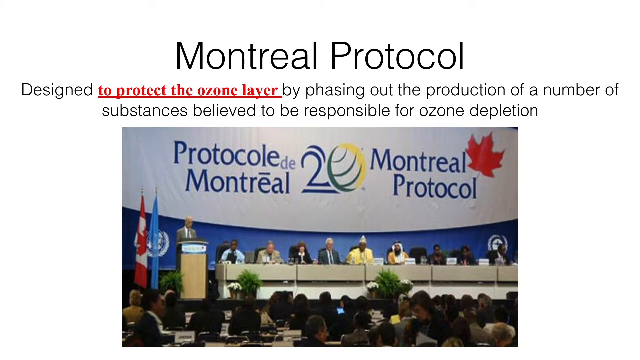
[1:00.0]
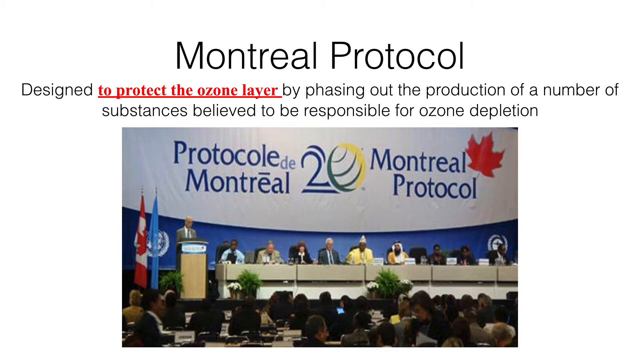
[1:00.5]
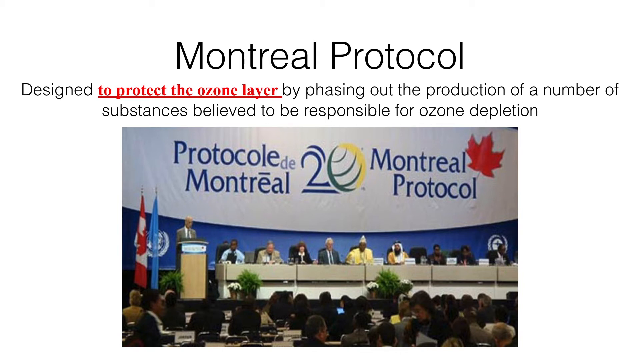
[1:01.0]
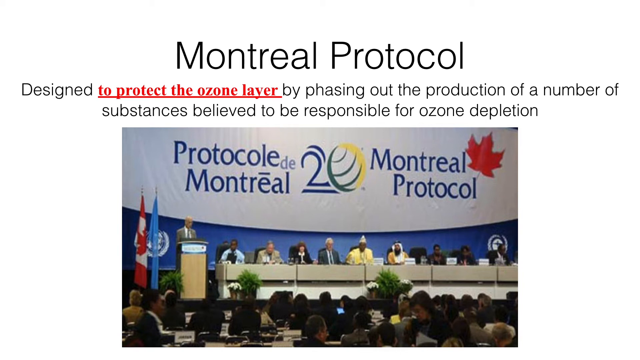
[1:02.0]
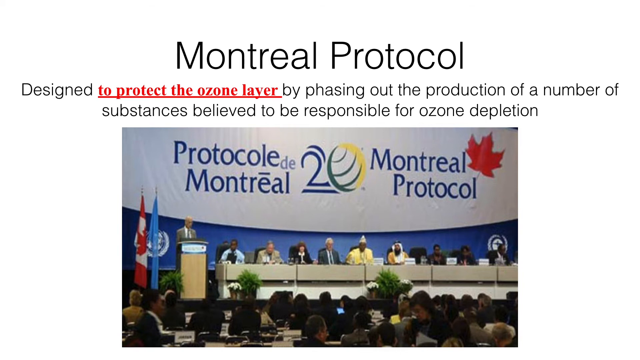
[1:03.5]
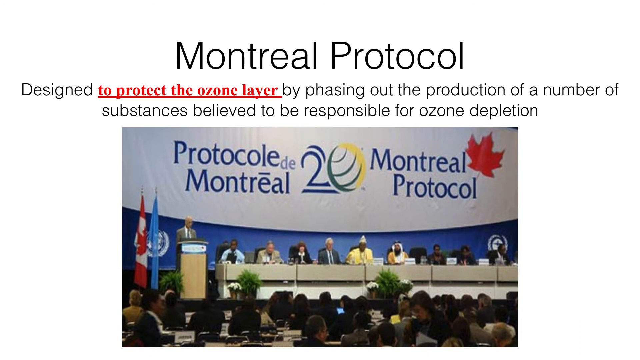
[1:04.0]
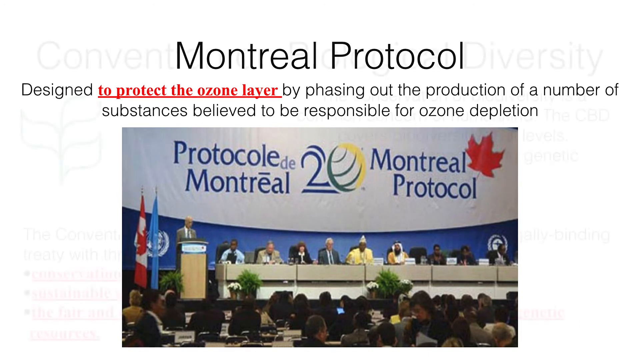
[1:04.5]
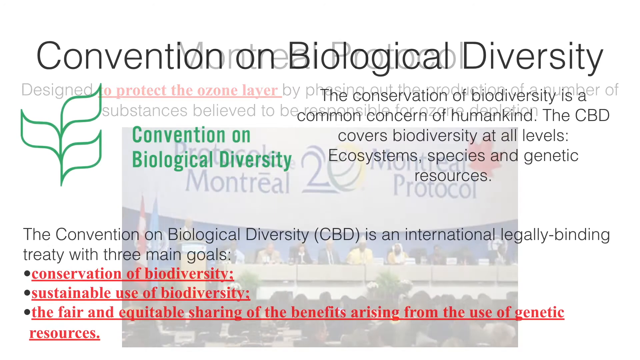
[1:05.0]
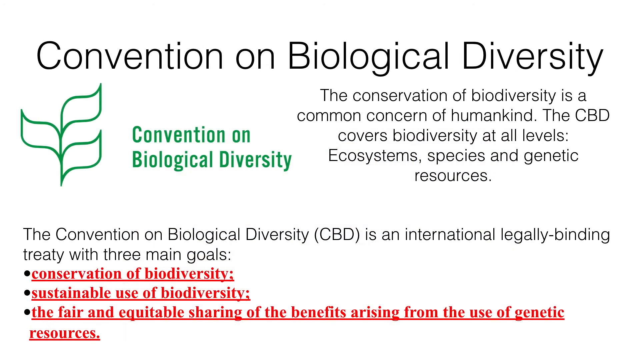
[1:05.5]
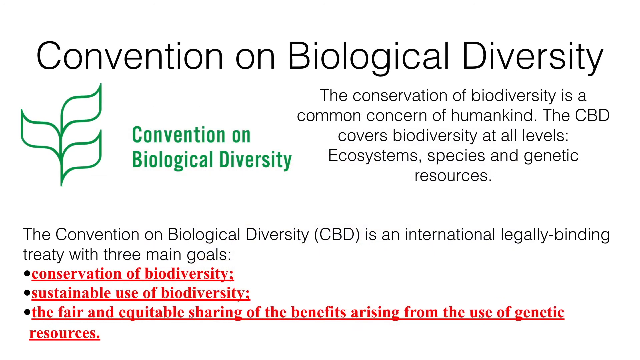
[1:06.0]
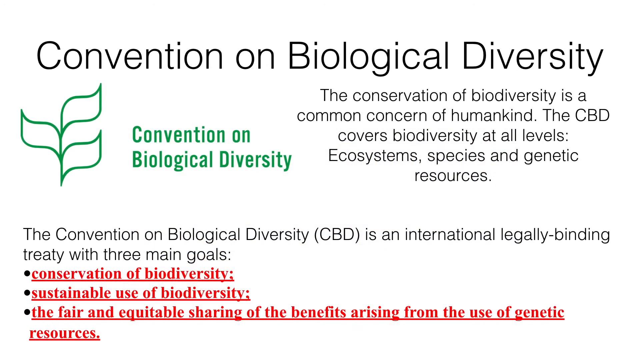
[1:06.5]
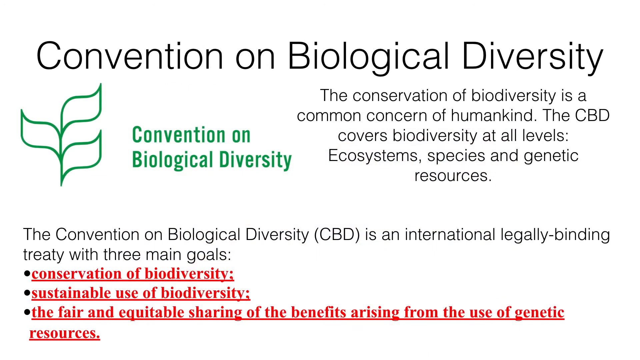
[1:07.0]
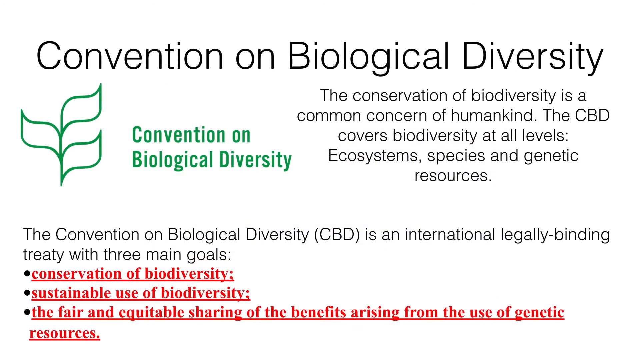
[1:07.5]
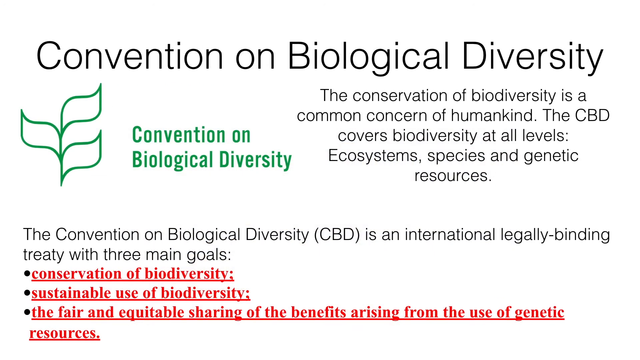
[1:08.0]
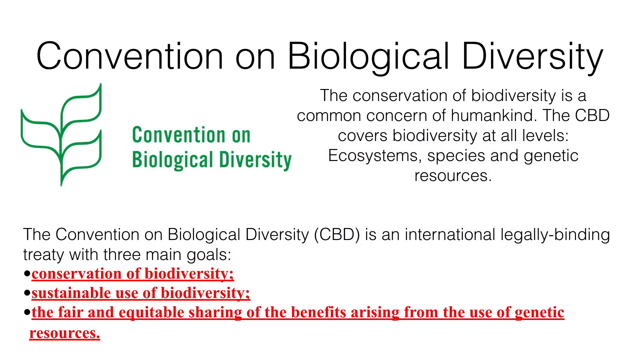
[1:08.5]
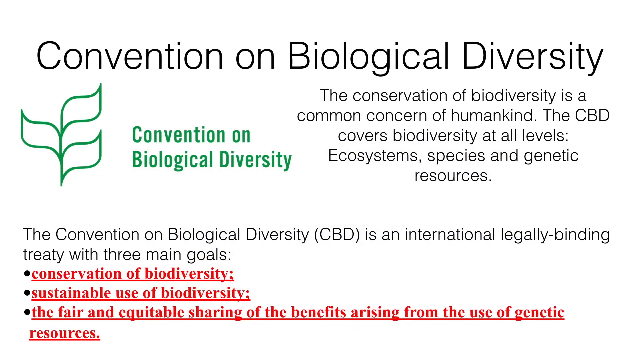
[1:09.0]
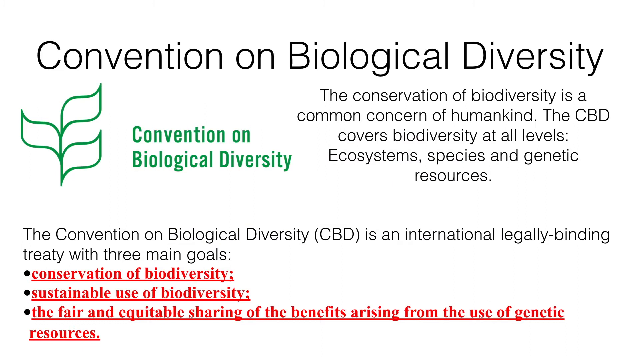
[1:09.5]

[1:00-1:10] A series of what look like pages on a website or in a video promoting different areas of environmental protection and activism continues. The first page has a header reading "Montreal Protocol," and below it text reads "Designed to protect the ozone layer by phasing out the production of a number of substances believed to be responsible for ozone depletion." Below this is a photograph of what looks like an international panel on a stage. Nine people are sitting behind a long white desk and appear to be wearing clothing from different countries. On the left, a person is standing at a podium speaking. Behind them, a large sign on the wall reads "Montreal Protocol" in French on the left and English on the right, with a stylized 20 in the center and a red maple leaf next to "Montreal Protocol" on the right. An audience is sitting in front of them. The screen then changes to a different webpage that reads "Convention on Biological Diversity." On the left is a stylized image that looks like a plant stem with three green leaves, and next to it reads "Convention on Biological Diversity." Beneath that is text explaining what the Convention on Biological Diversity is.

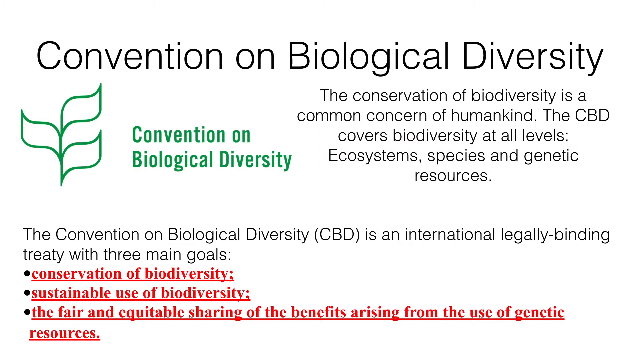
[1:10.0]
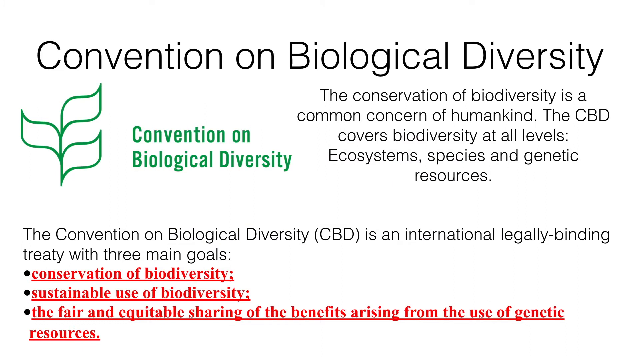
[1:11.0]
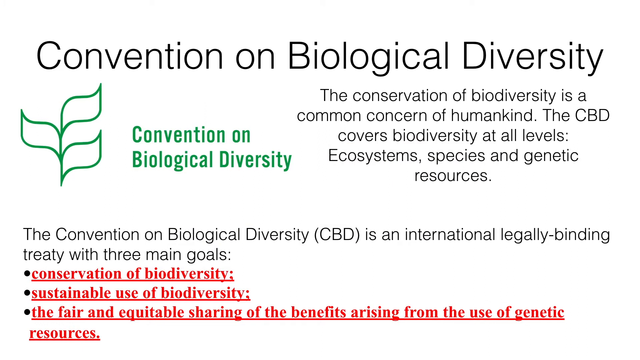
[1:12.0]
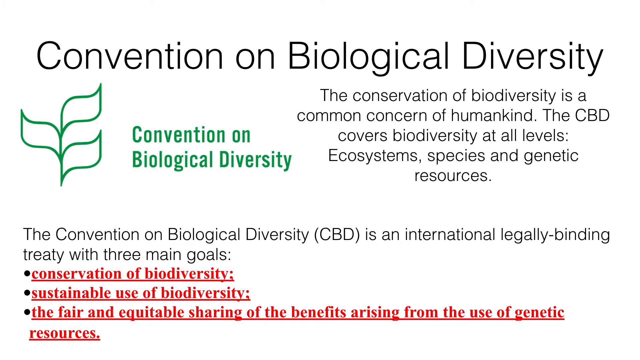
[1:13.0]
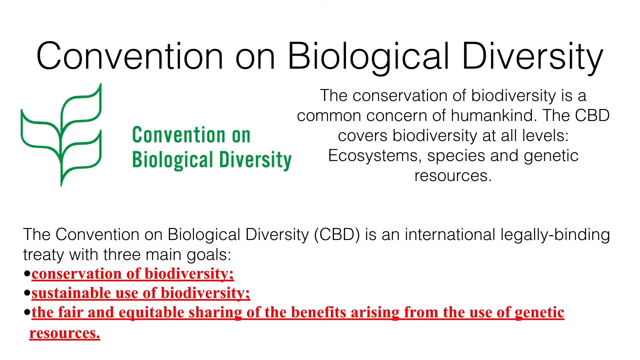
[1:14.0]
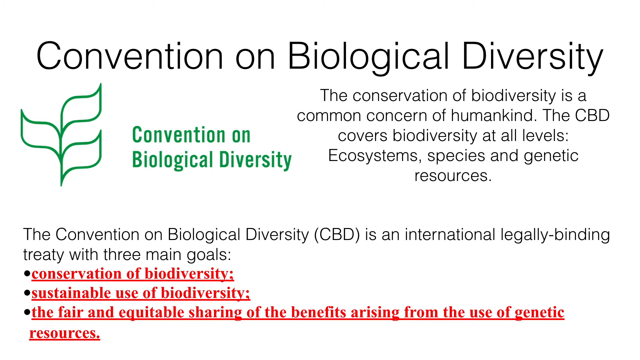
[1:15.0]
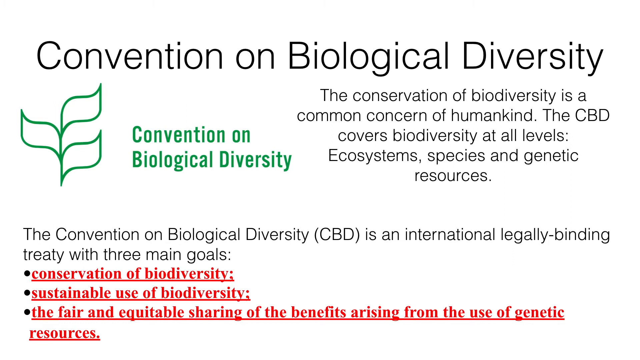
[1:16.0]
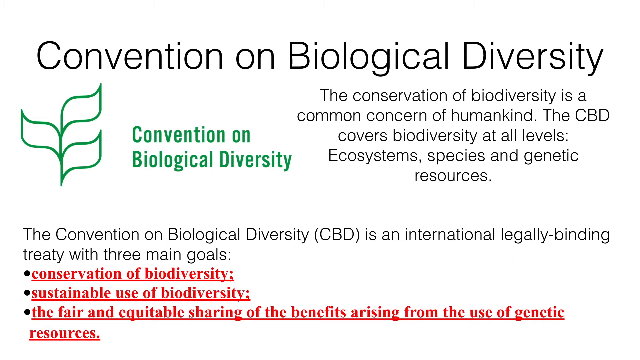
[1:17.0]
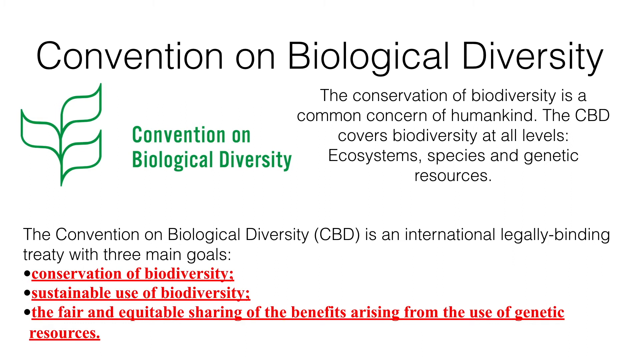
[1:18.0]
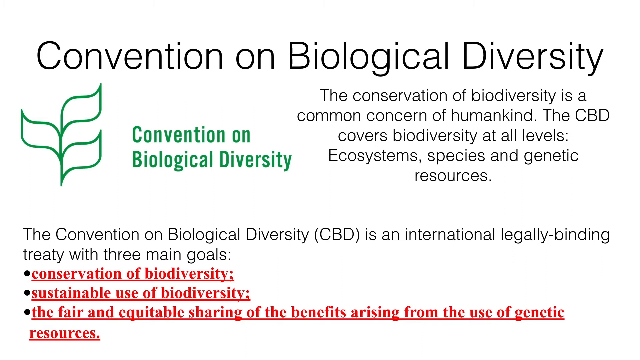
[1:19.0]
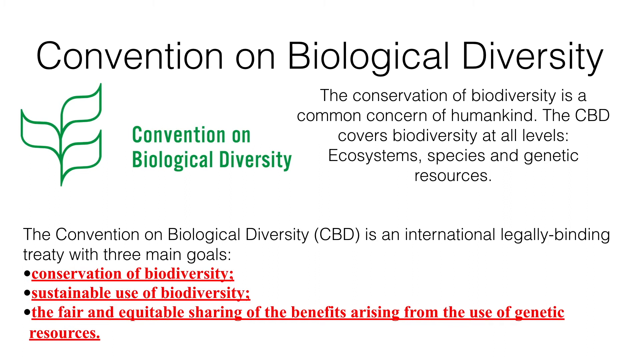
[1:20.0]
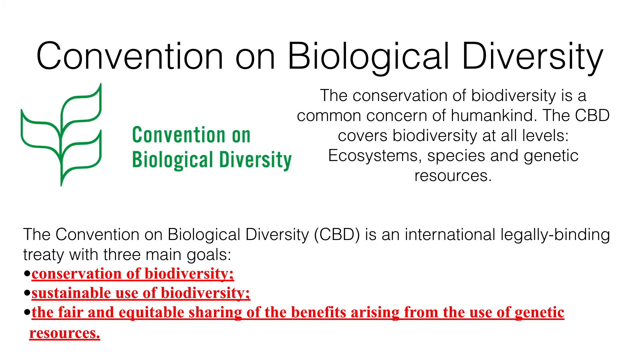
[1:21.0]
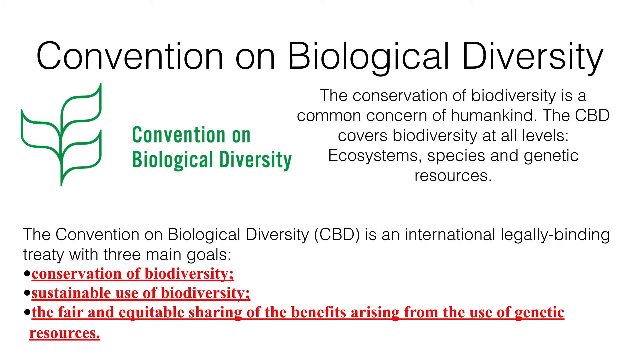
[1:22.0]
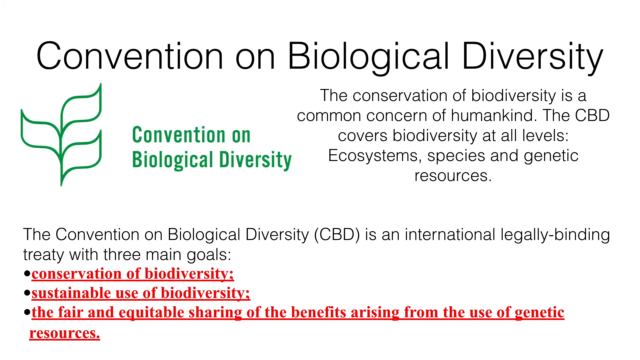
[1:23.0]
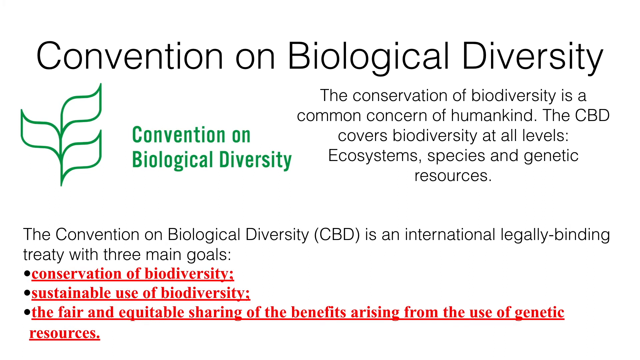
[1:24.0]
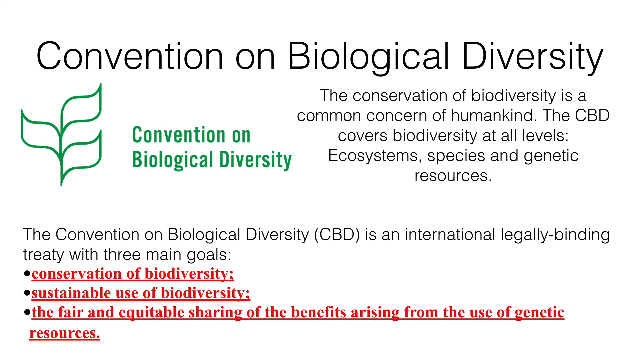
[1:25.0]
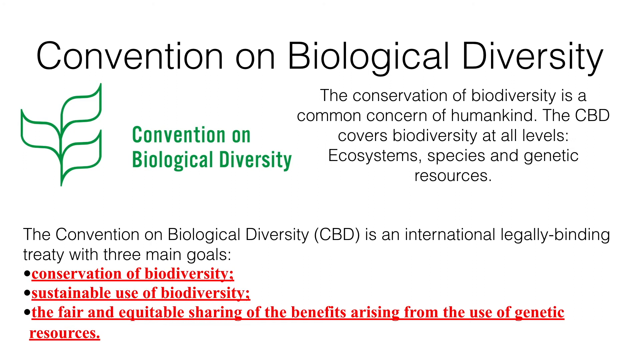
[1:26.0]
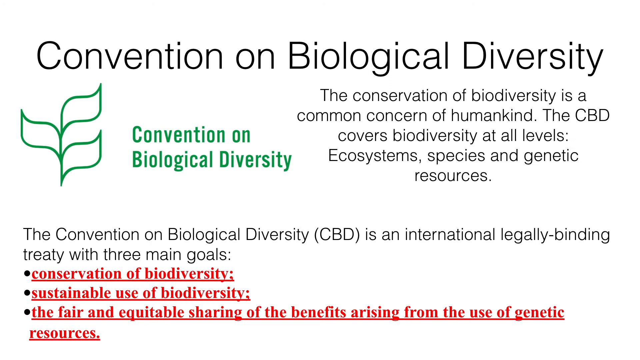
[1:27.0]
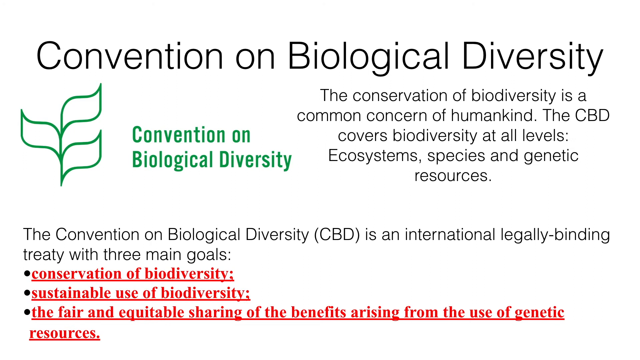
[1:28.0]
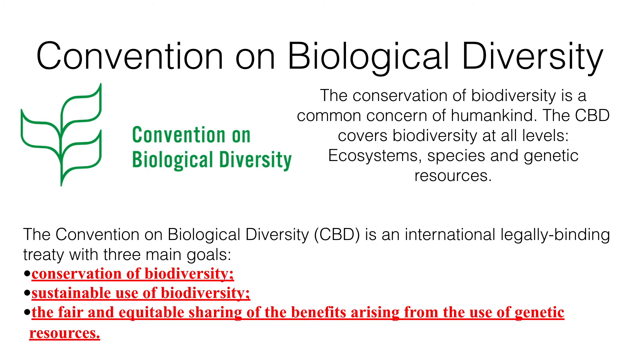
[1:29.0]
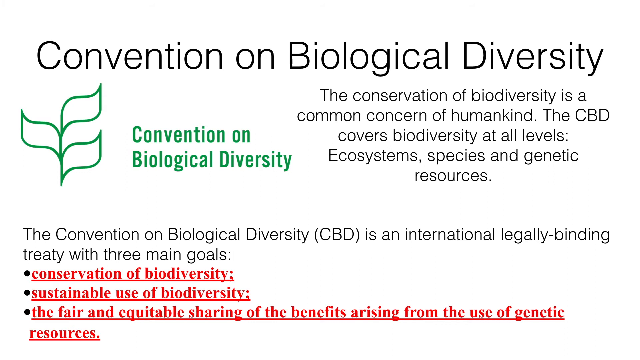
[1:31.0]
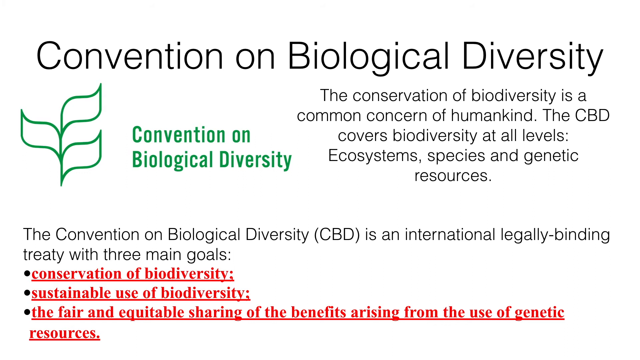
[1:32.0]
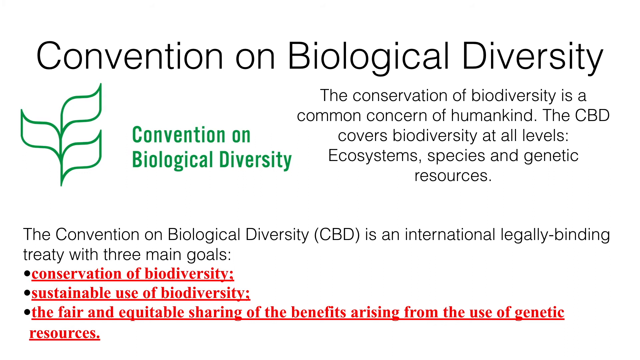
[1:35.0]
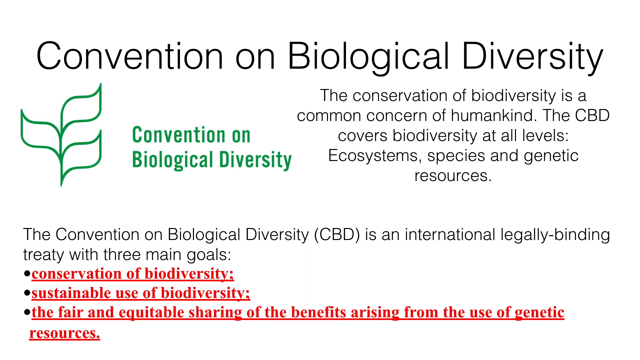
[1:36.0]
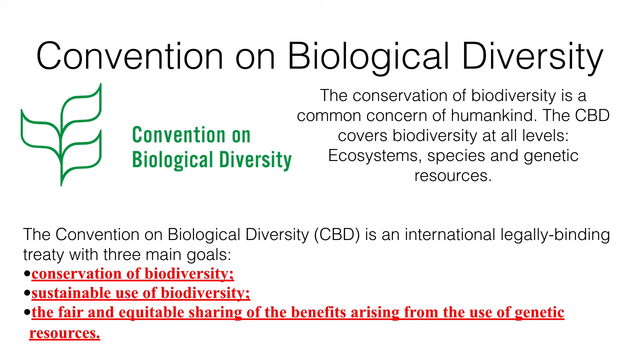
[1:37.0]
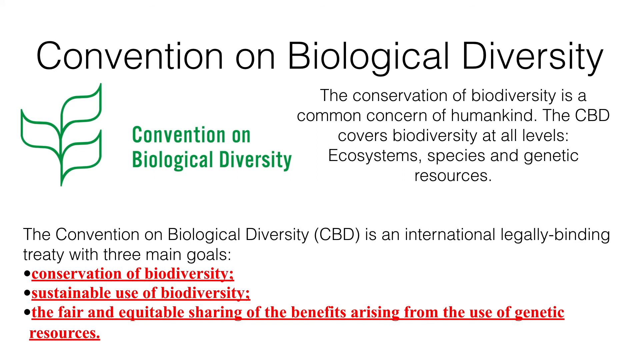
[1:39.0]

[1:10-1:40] A page from what appears to be a website giving information on different aspects of environmental protection and activism has a header reading "Convention on Biological Diversity." On the left is a stylized graphic showing what looks like the stem of a plant with three green leaves, and next to it reads "Convention on Biological Diversity." On the right, text reads: "The conservation of biodiversity is a common concern of humankind. The CBD covers biodiversity at all levels: ecosystems, species, and genetic resources." Below that, more text reads: "The Convention of Biological Diversity (CBD) is an international legally-binding treaty with three main goals." The goals are listed with bullet points: "Conservation of biodiversity," "Sustainable use of biodiversity," and "The fair and equitable sharing of the benefits arising from the use of genetic resources." The three goals are written in red text and underlined. The rest of the text is black except for "Convention on Biological Diversity," which is written in green, and the background of the screen is white.